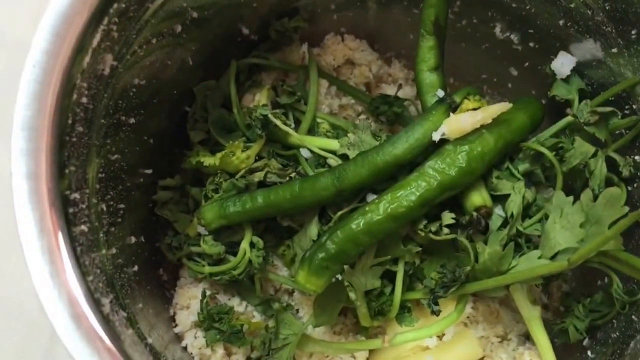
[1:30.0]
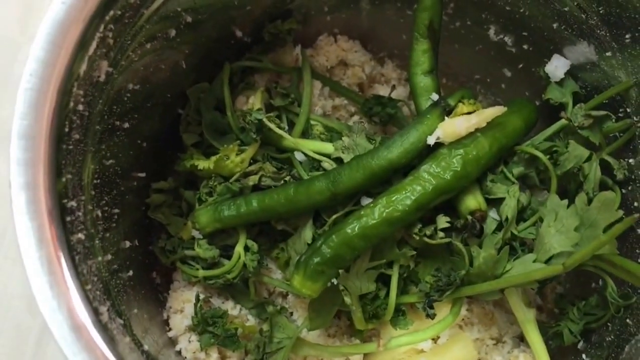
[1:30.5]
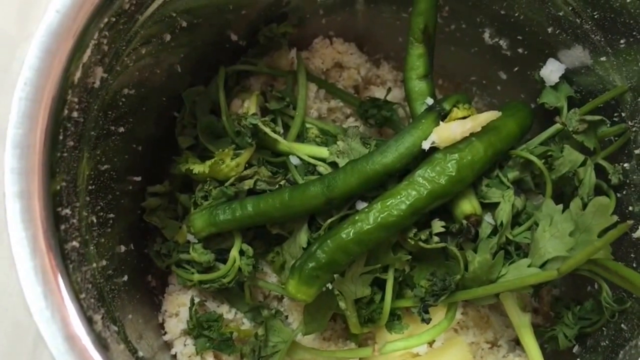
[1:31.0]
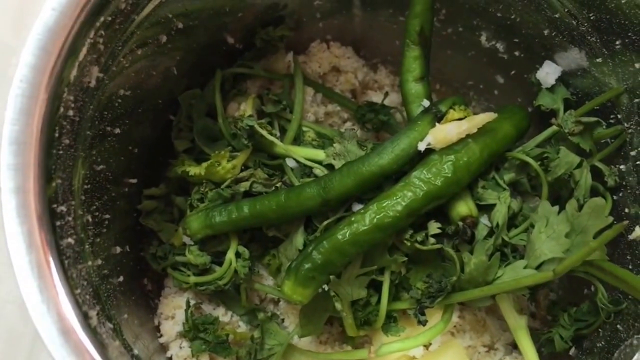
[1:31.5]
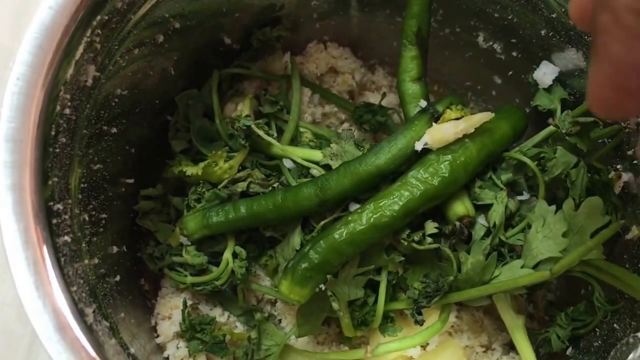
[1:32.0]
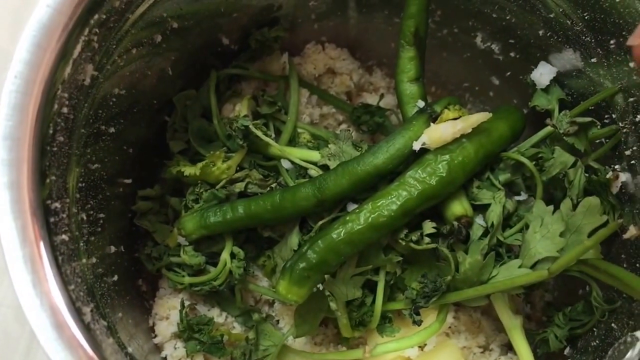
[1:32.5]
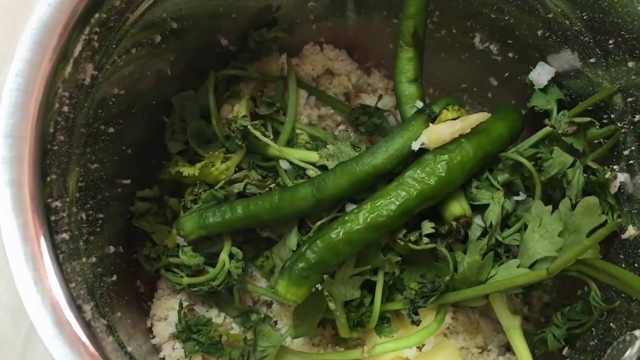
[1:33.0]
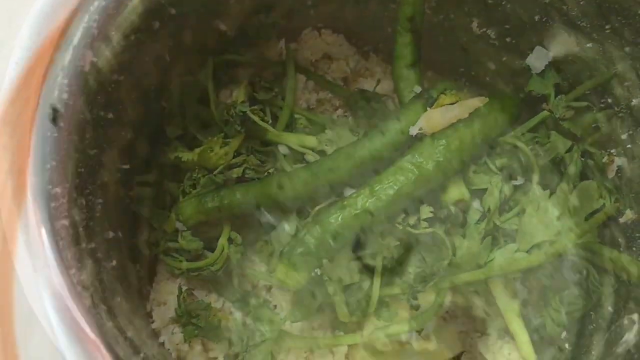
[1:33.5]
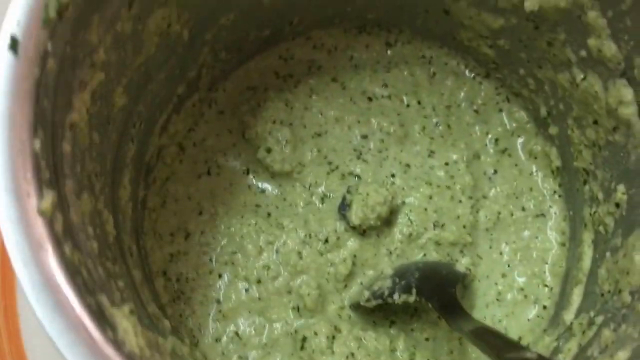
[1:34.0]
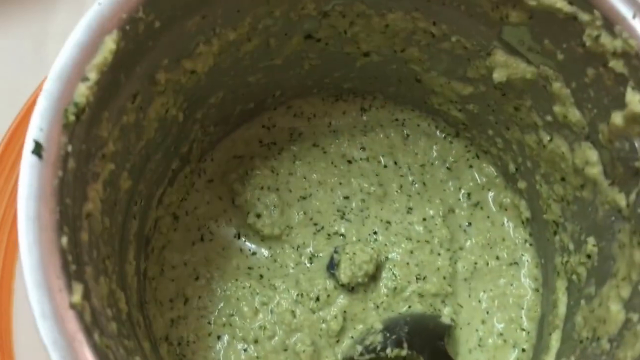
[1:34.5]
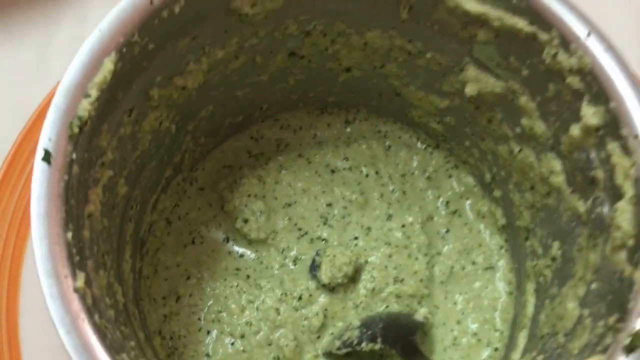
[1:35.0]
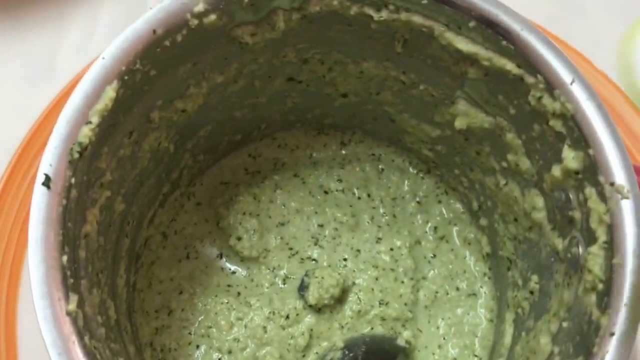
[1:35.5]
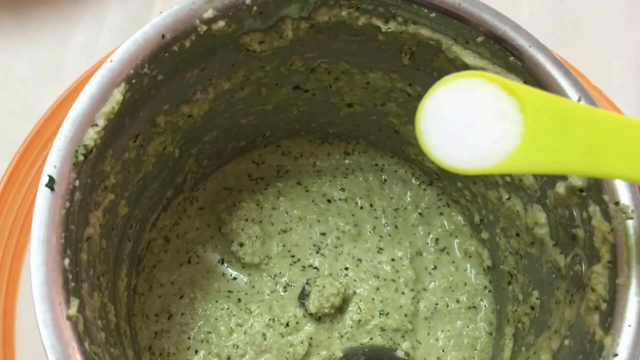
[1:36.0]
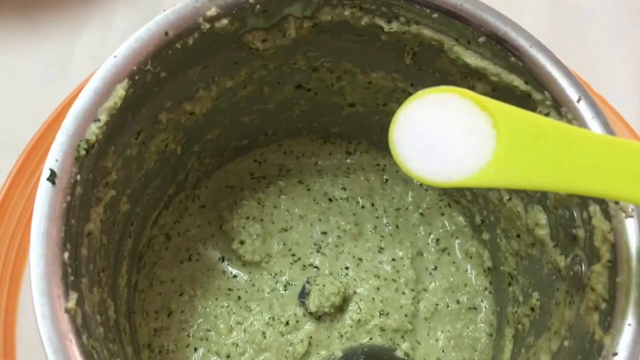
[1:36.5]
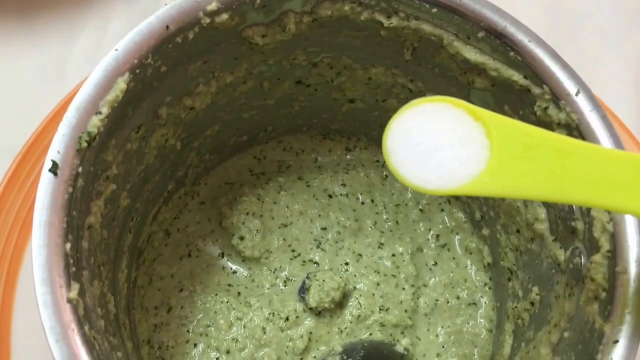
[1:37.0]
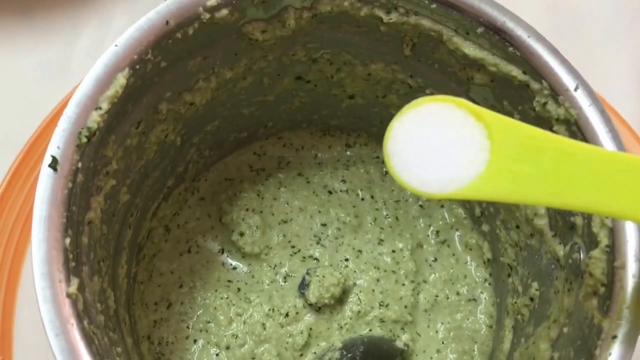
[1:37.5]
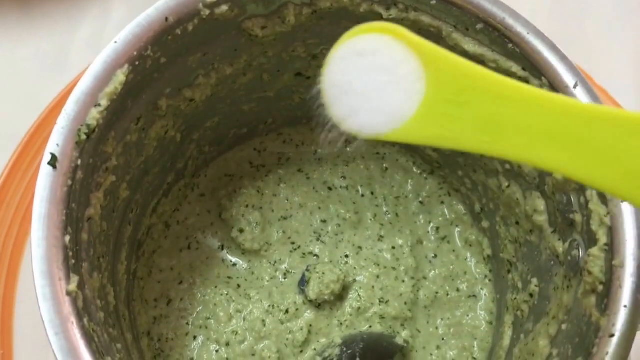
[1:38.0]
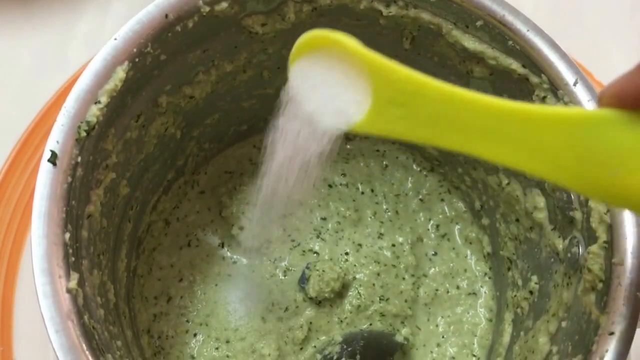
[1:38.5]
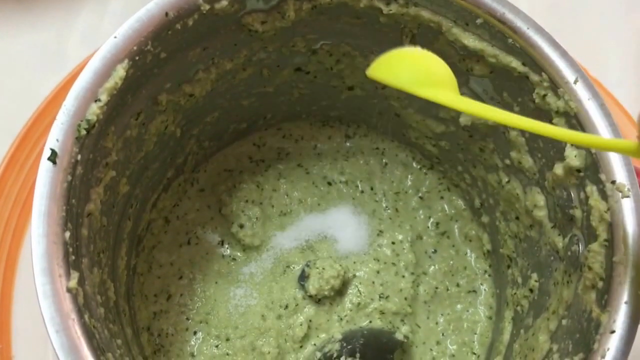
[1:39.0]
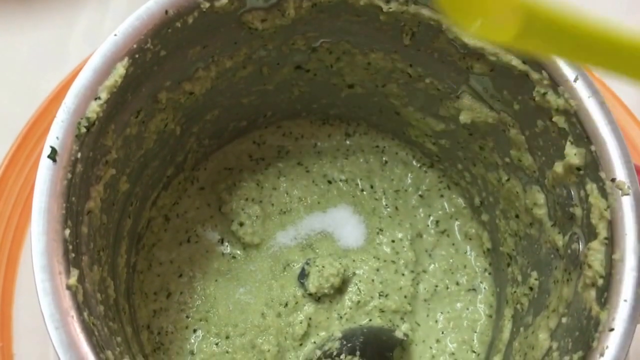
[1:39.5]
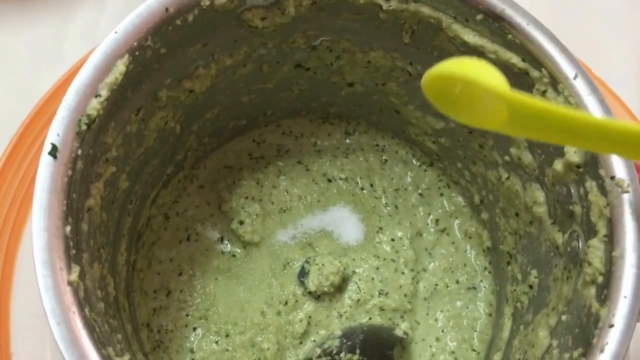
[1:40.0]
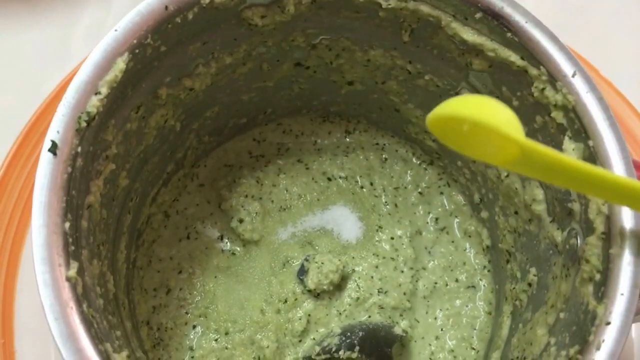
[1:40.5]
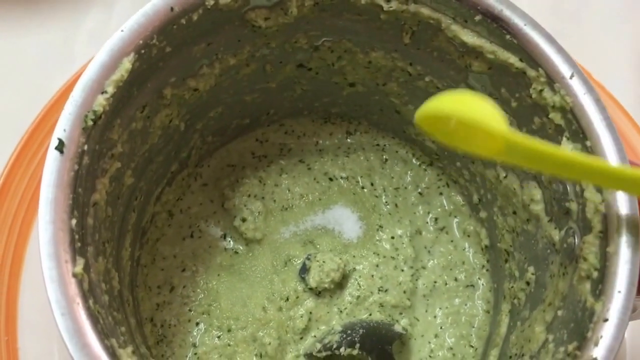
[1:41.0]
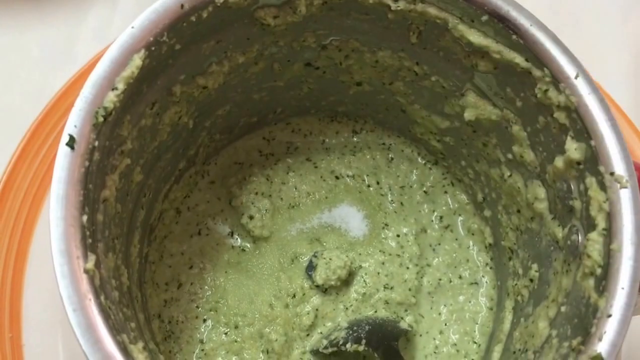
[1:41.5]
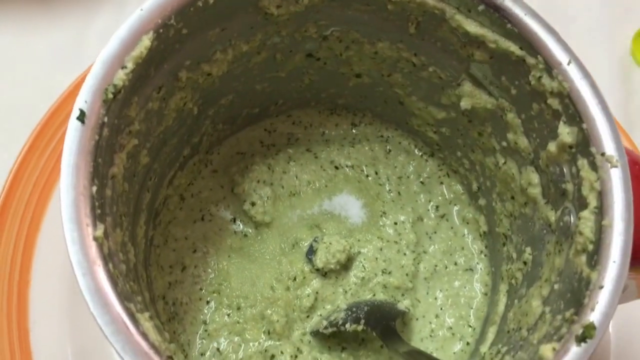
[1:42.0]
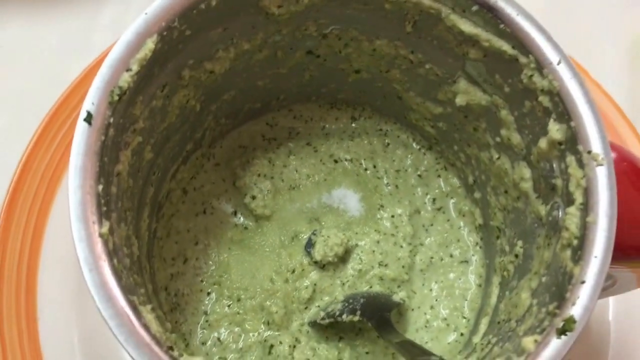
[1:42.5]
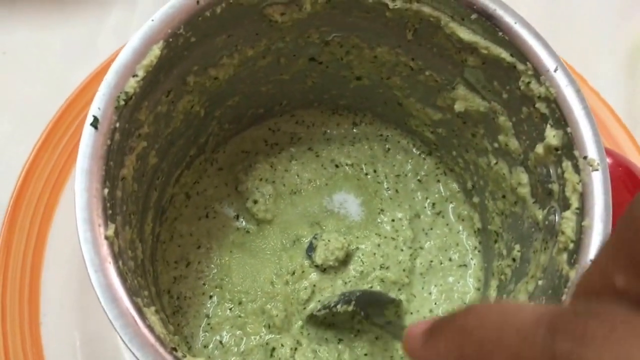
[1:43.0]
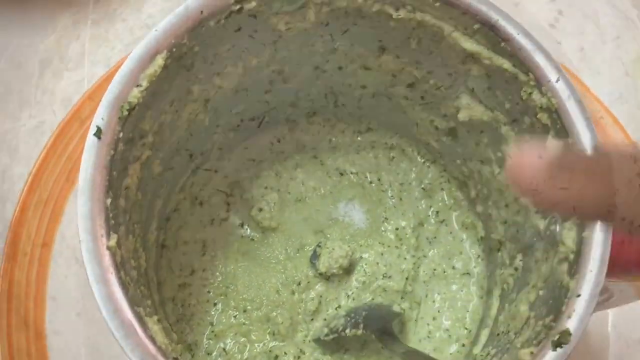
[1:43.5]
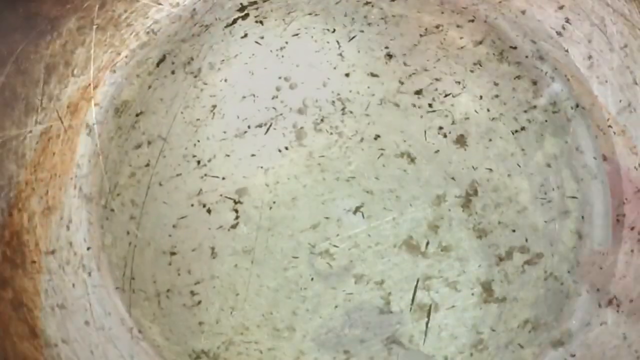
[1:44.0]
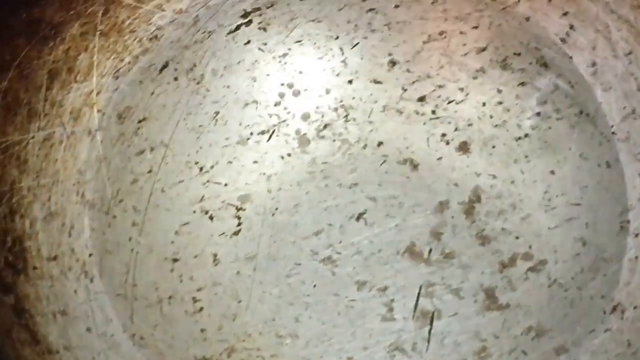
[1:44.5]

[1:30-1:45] All the ingredients for the chutney appear to have been added to a food processor, and probably about half a teaspoon of kosher or sea salt, possibly fine salt, seems to be added after processing. The chutney looks silky smooth and is a pale green color, with little tiny pieces of green vegetables visible in it.